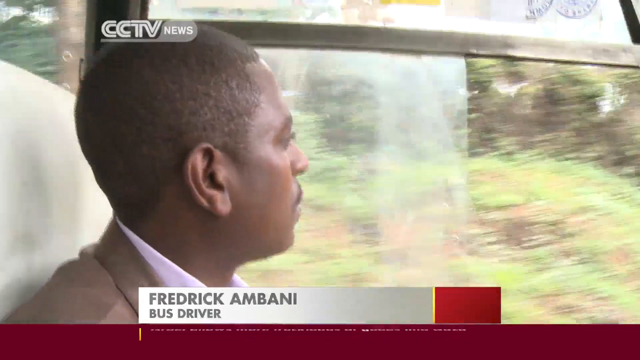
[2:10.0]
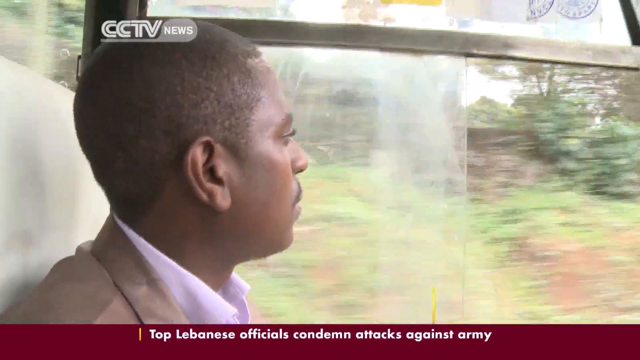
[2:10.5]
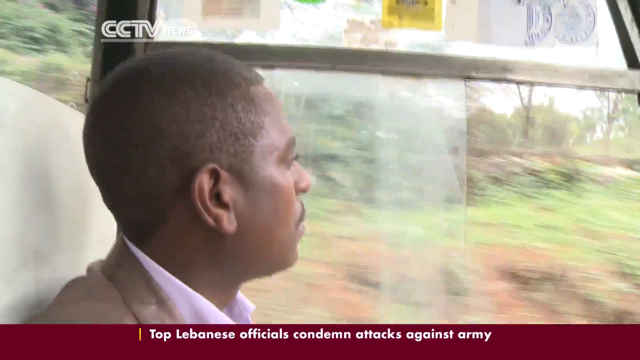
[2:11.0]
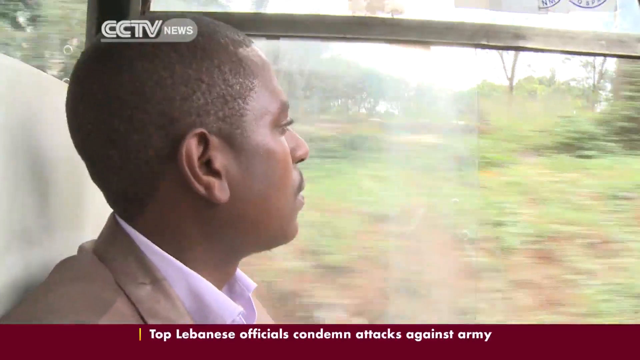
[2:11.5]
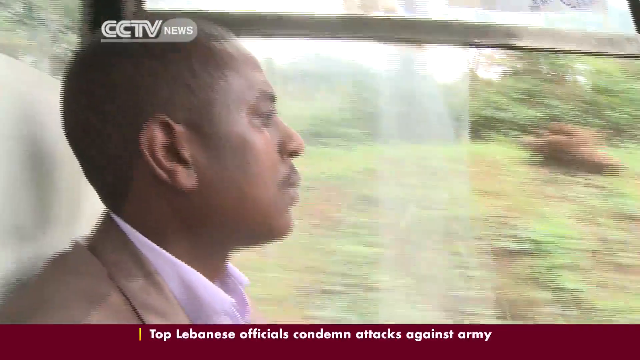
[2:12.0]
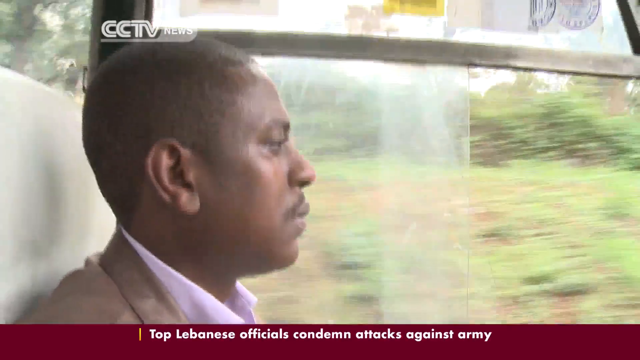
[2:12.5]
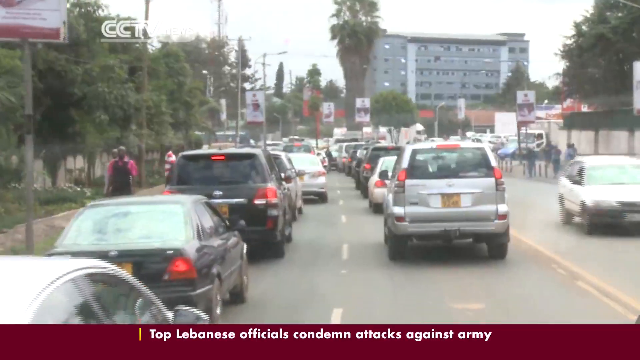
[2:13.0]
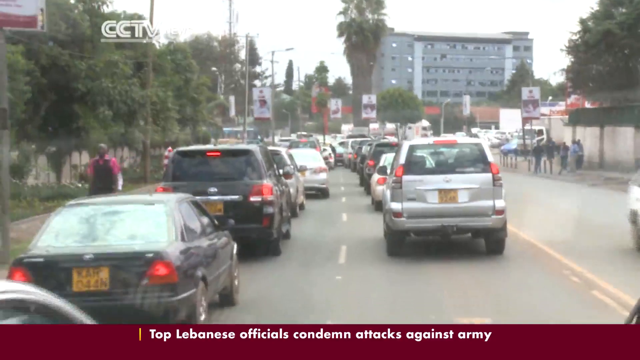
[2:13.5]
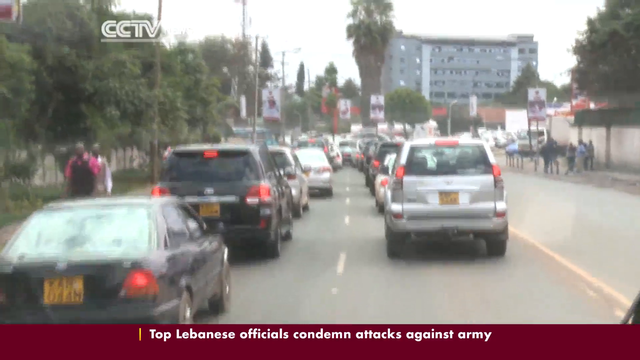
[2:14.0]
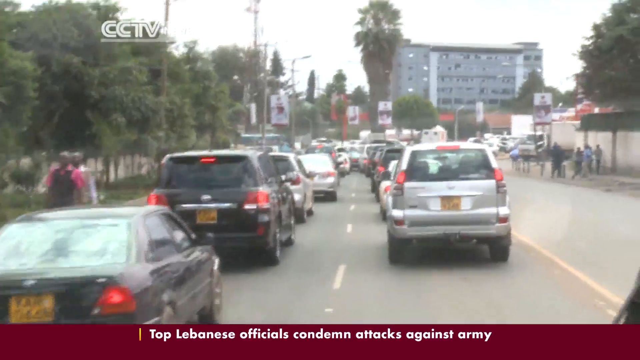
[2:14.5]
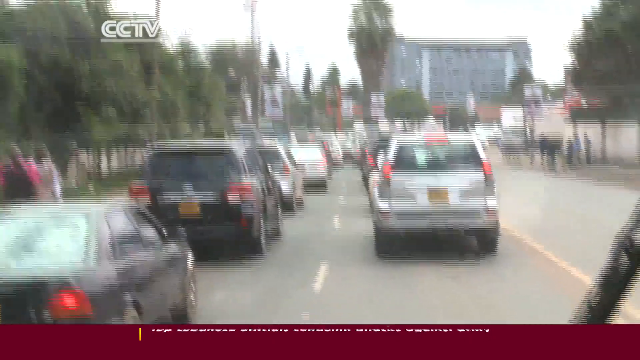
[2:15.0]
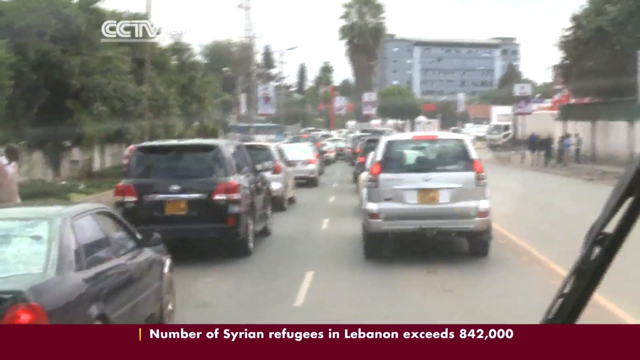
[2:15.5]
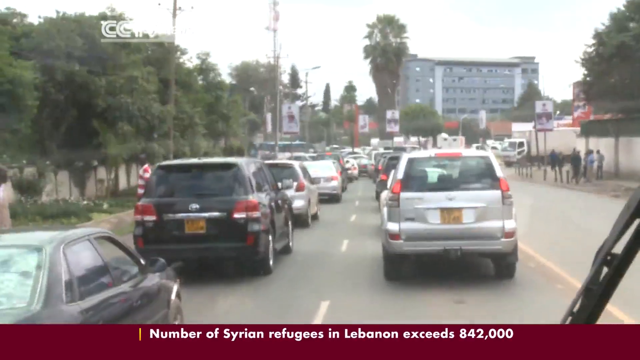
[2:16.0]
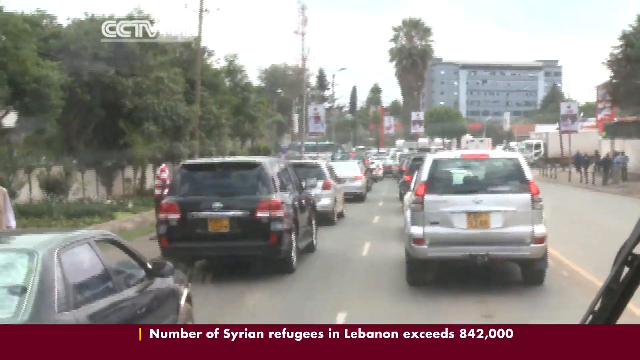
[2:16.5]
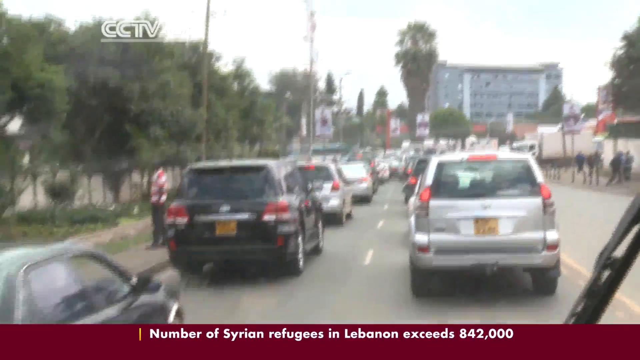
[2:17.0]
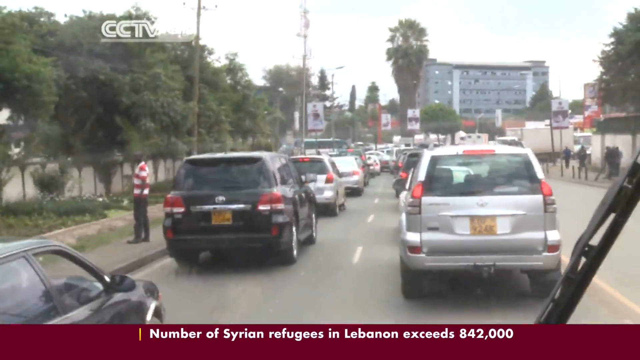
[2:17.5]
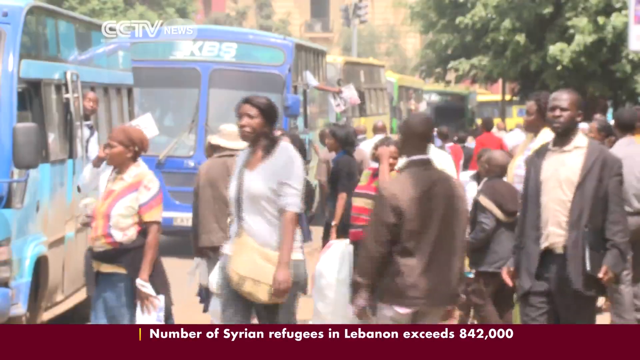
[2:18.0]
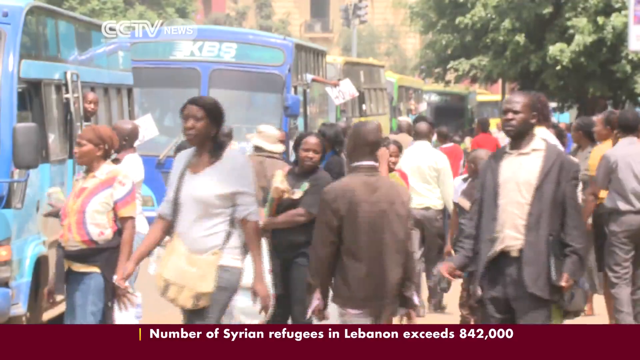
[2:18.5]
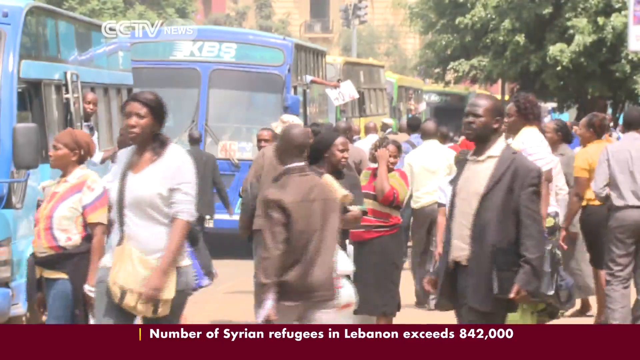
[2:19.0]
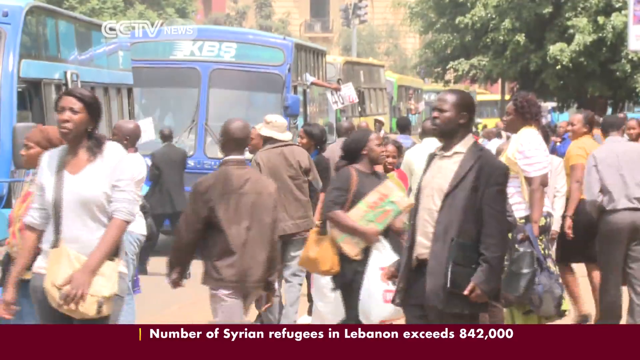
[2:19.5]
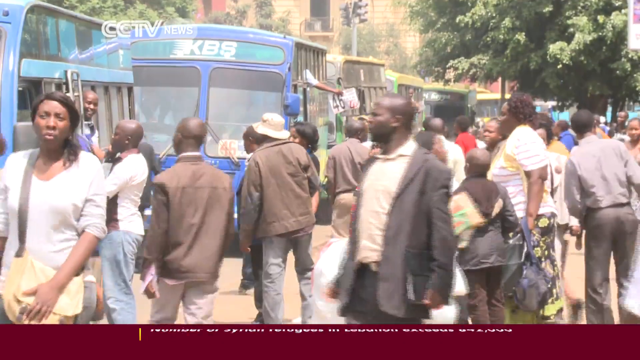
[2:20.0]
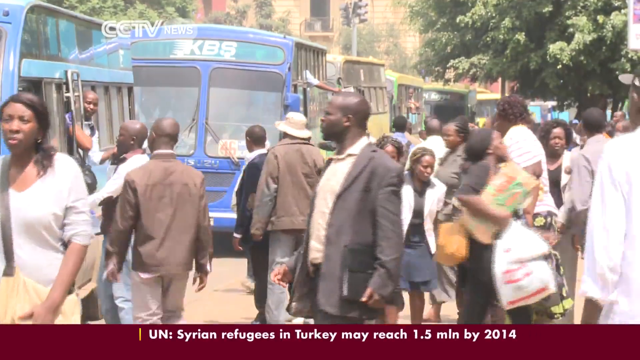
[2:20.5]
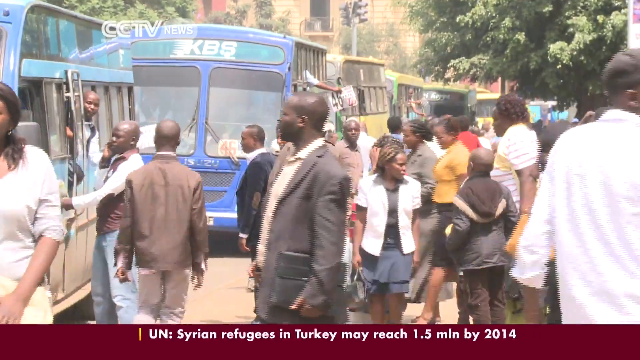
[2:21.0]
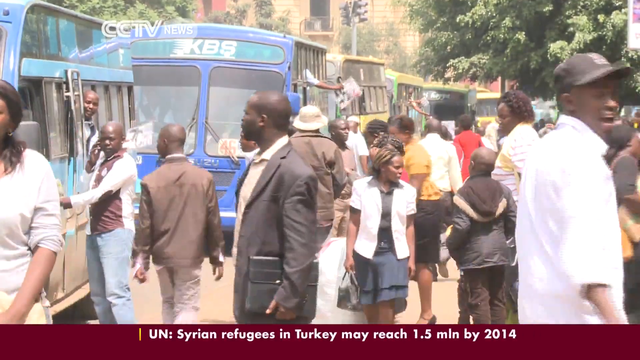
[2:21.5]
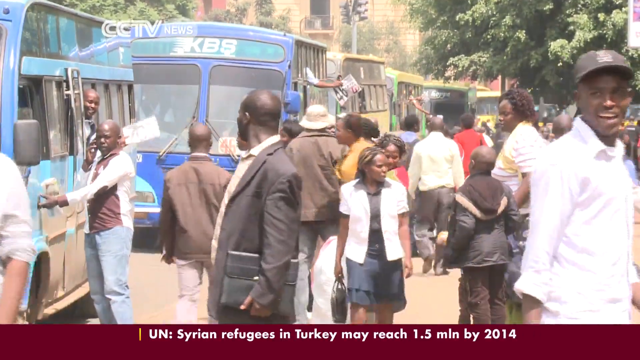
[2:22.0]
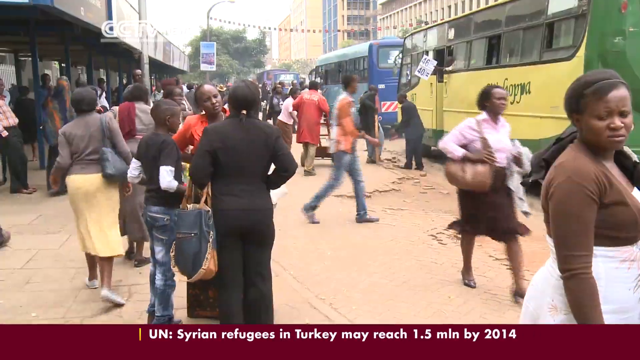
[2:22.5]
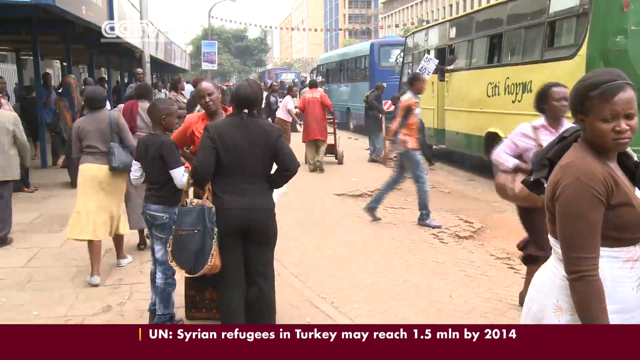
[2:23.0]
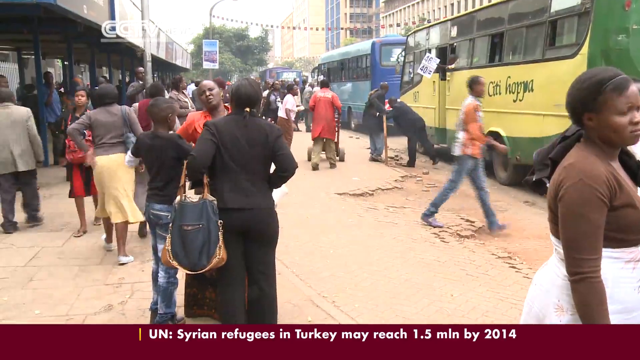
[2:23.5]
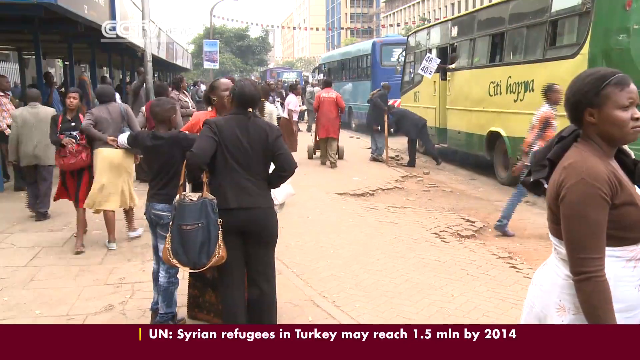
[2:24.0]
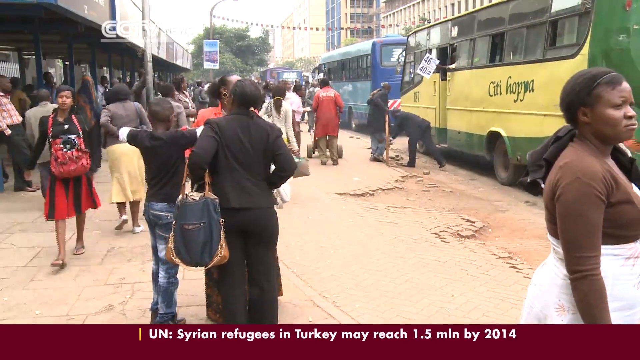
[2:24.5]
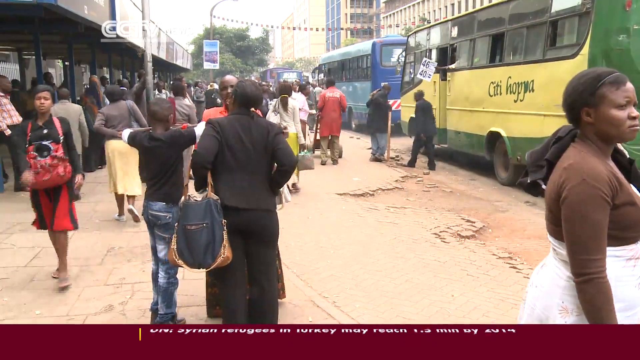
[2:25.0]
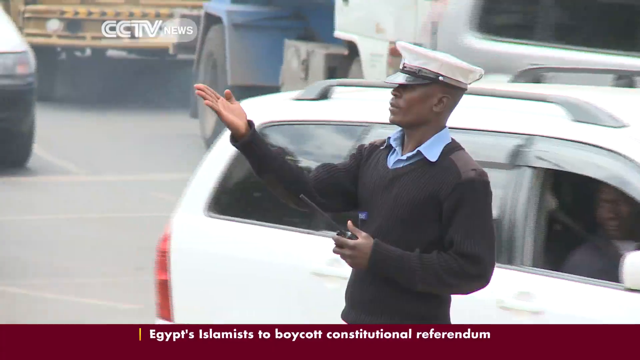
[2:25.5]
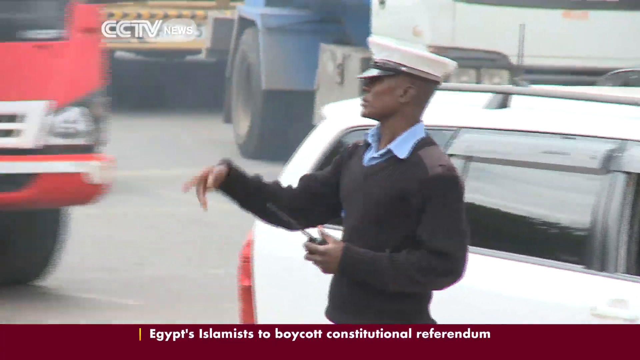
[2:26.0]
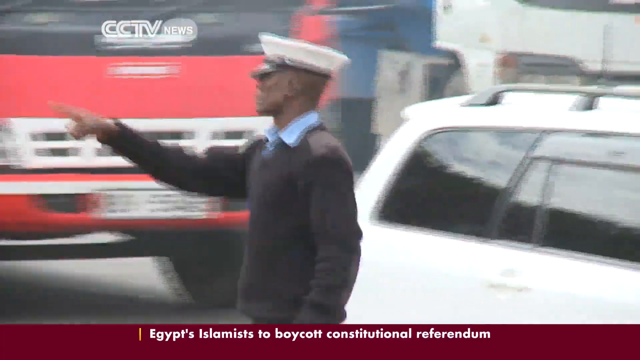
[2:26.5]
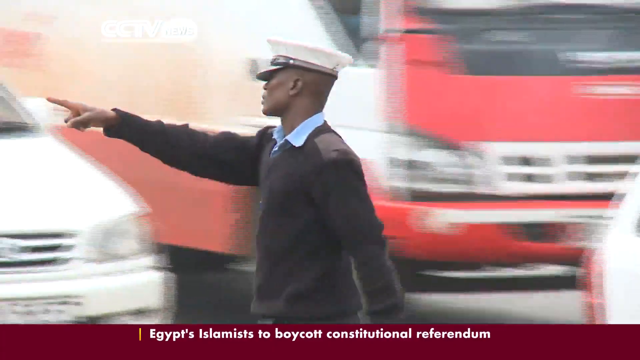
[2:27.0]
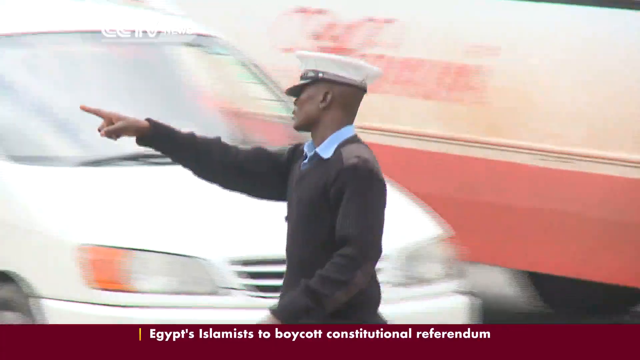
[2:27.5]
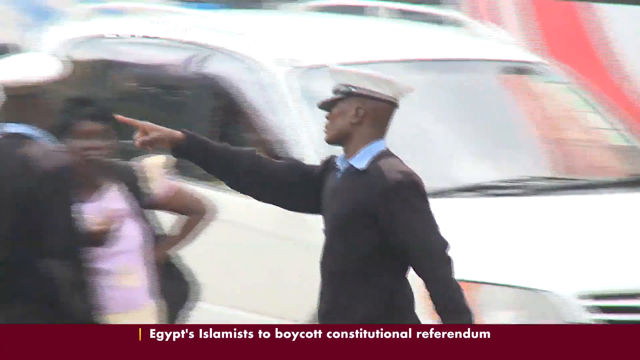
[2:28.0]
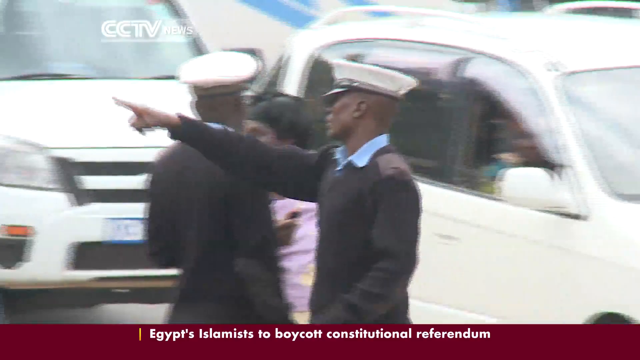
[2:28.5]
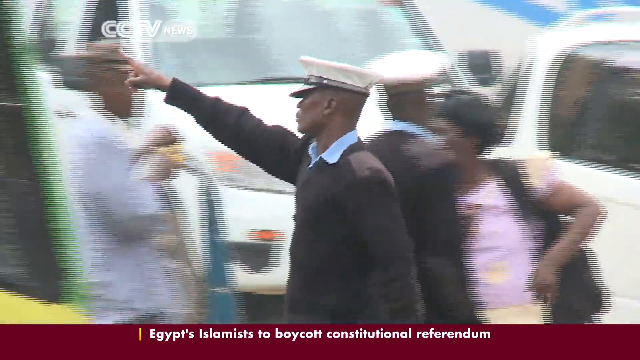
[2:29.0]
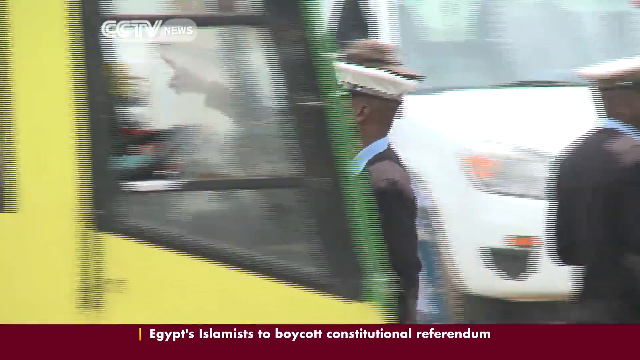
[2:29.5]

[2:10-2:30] The bus driver is shown, and on-screen text gives his name as "Frederick M. Bonney." He drives while talking, and the reporter sits in one of the left-side seats, enjoying the ride. There is a lot of traffic, waiting and driving. A crowded area follows with many people: some women wear skirts or dresses, some fancier than others, and men wear jeans or dress pants. Buses are lined up along the side. A police officer motions for someone to go a certain direction.